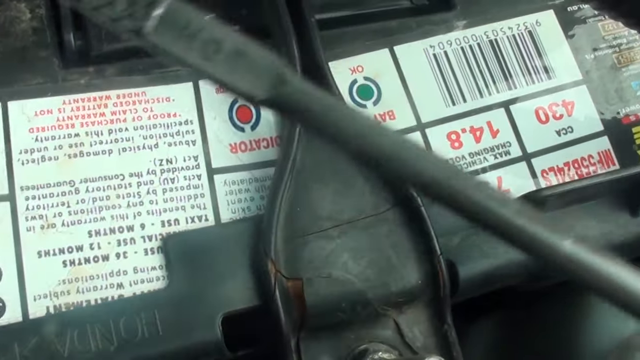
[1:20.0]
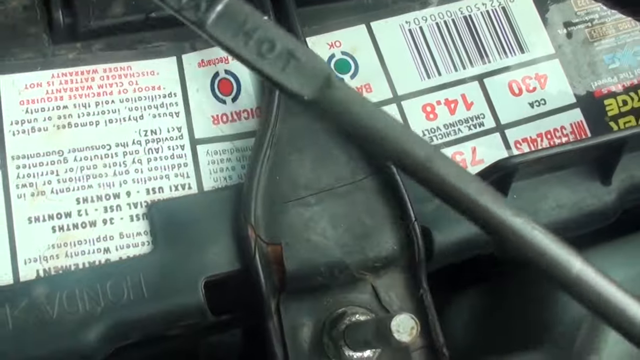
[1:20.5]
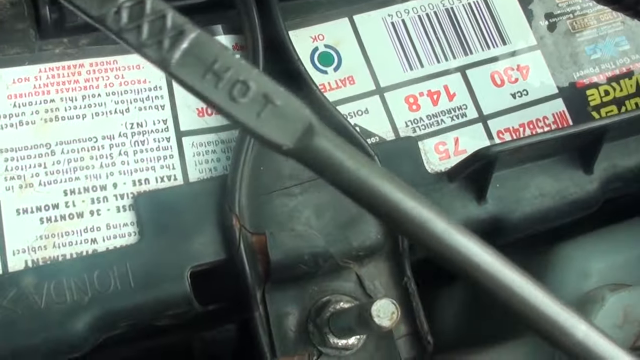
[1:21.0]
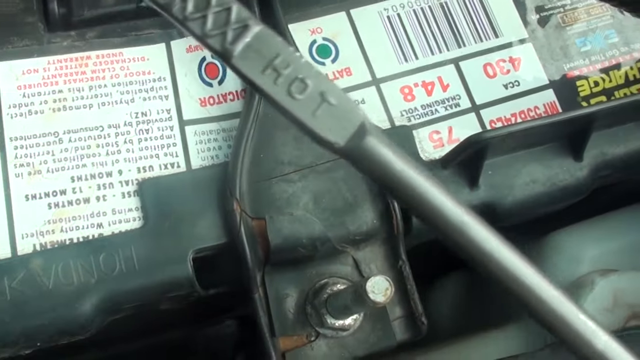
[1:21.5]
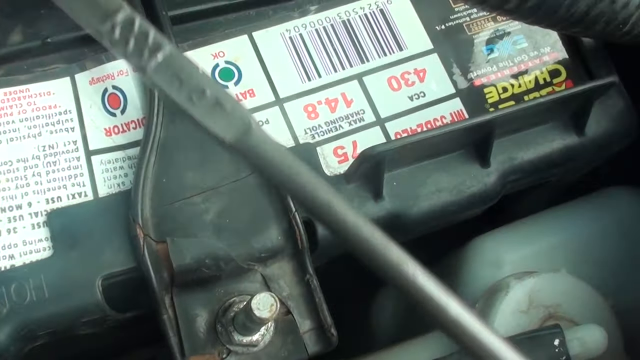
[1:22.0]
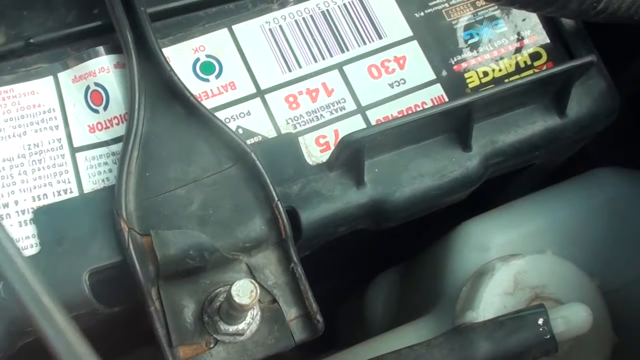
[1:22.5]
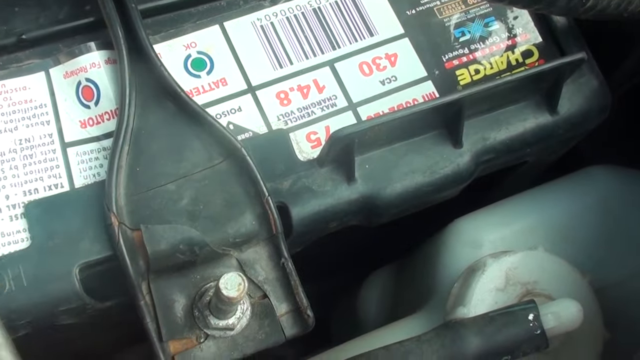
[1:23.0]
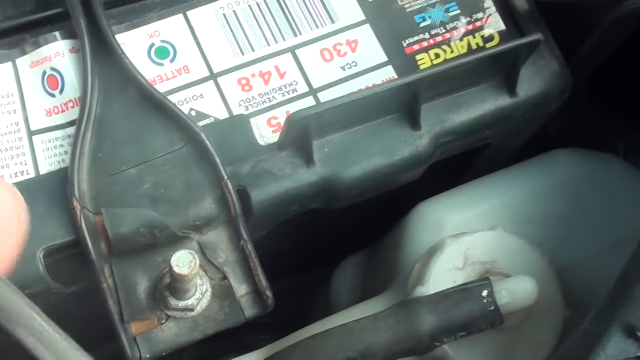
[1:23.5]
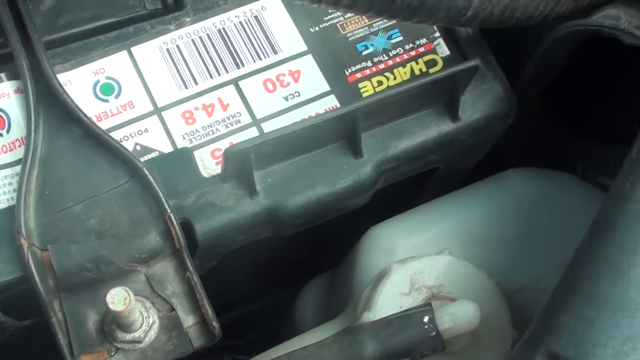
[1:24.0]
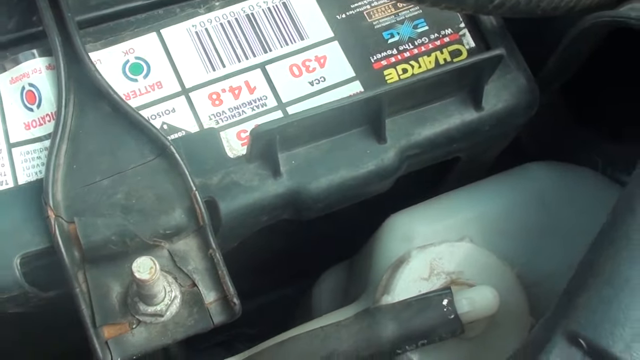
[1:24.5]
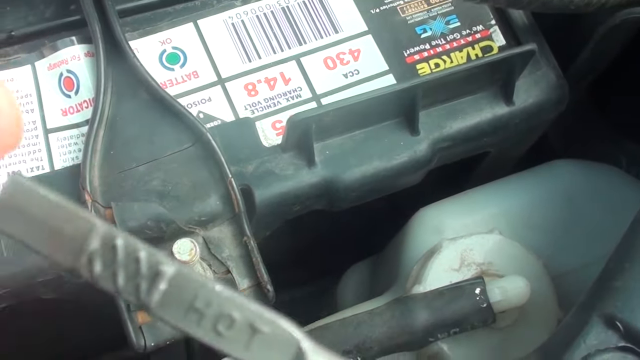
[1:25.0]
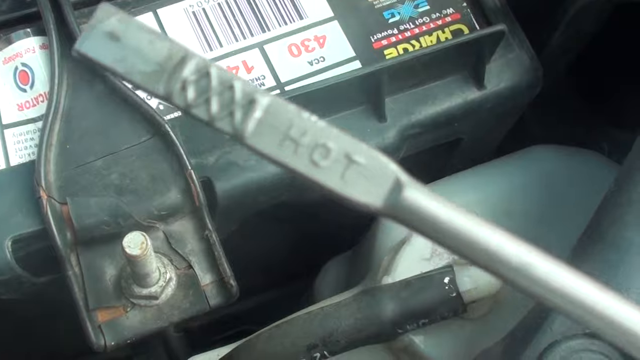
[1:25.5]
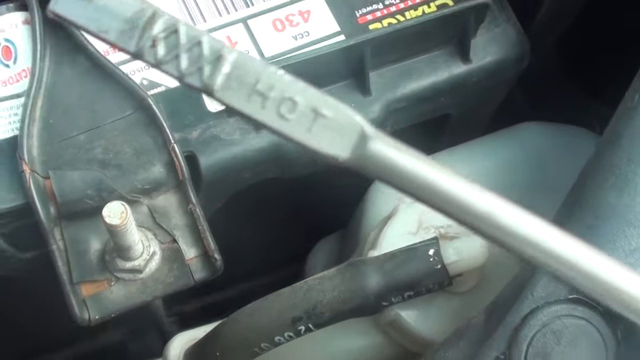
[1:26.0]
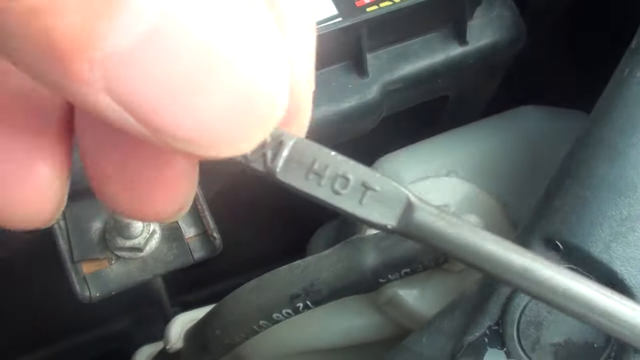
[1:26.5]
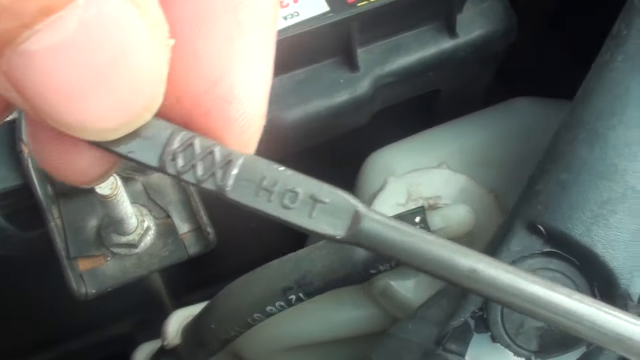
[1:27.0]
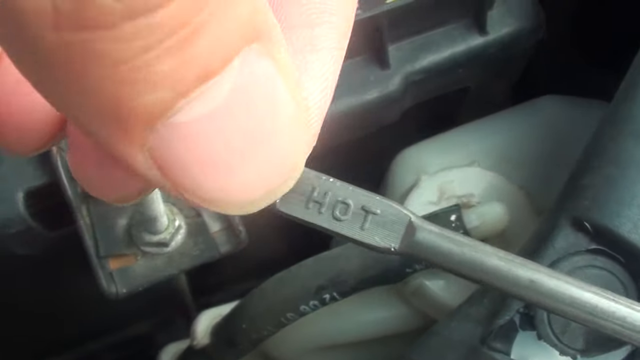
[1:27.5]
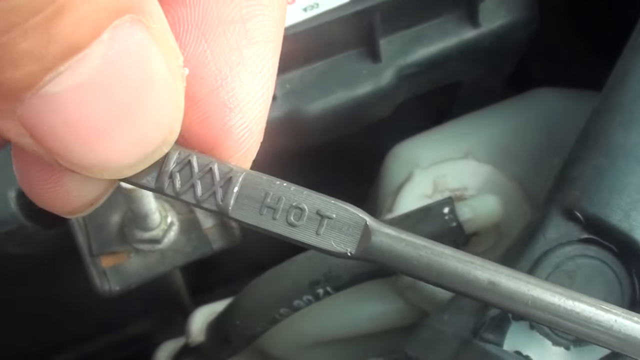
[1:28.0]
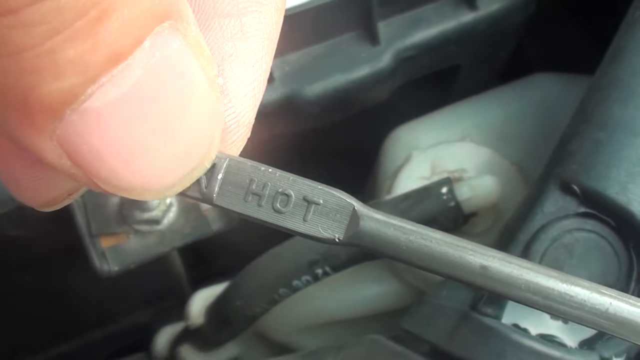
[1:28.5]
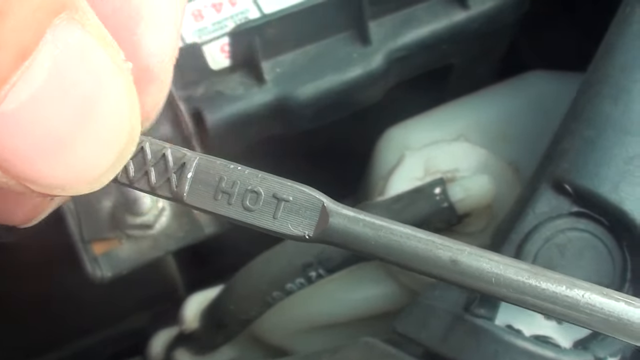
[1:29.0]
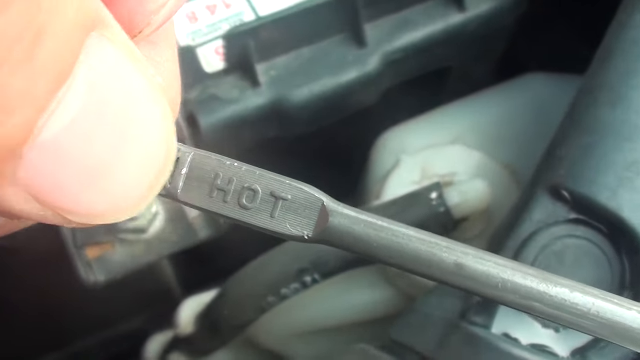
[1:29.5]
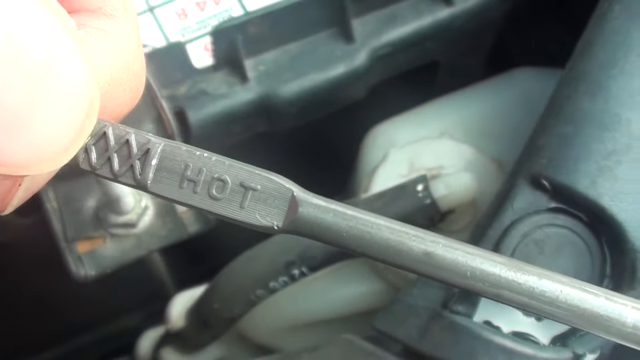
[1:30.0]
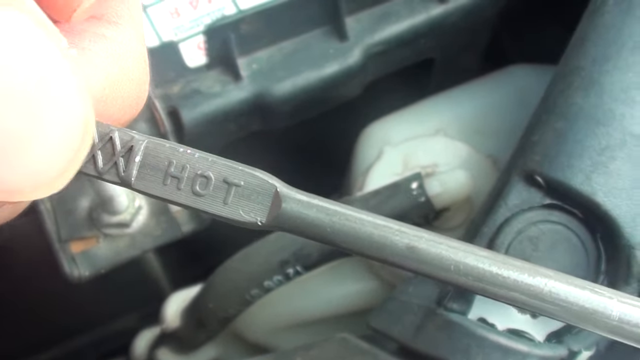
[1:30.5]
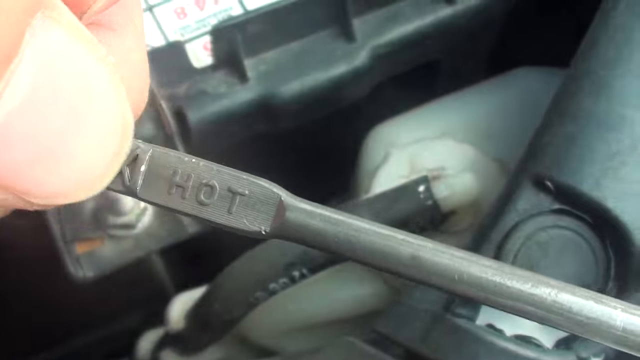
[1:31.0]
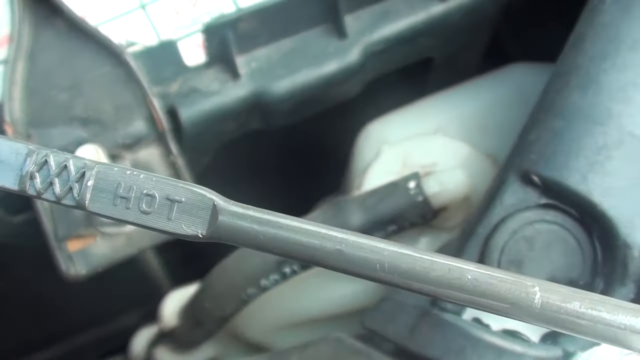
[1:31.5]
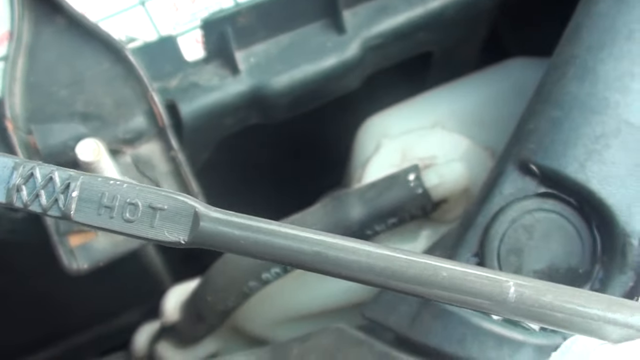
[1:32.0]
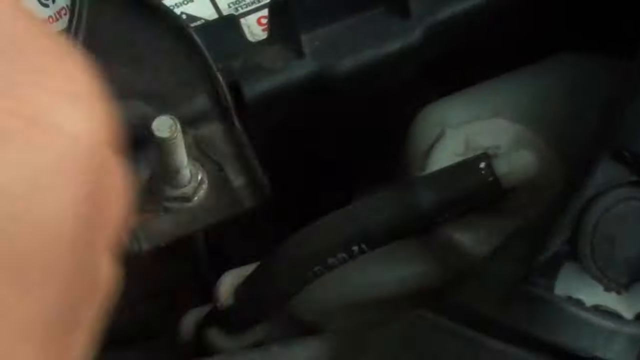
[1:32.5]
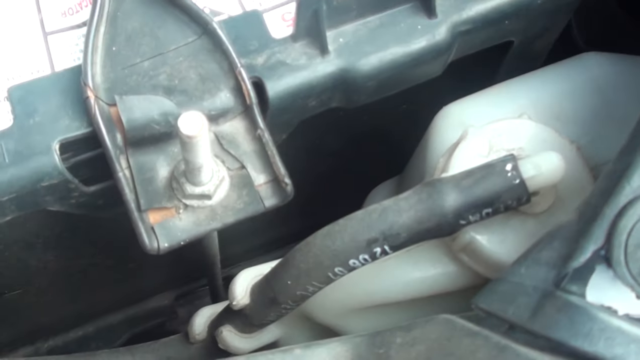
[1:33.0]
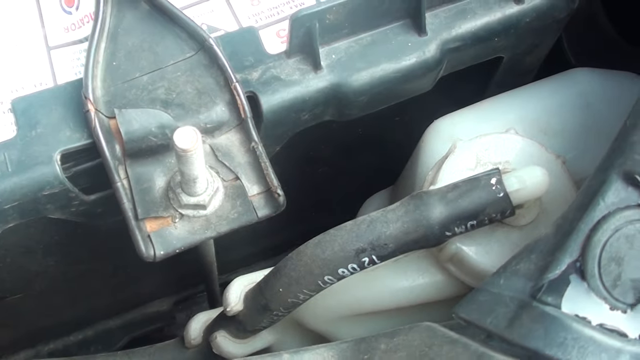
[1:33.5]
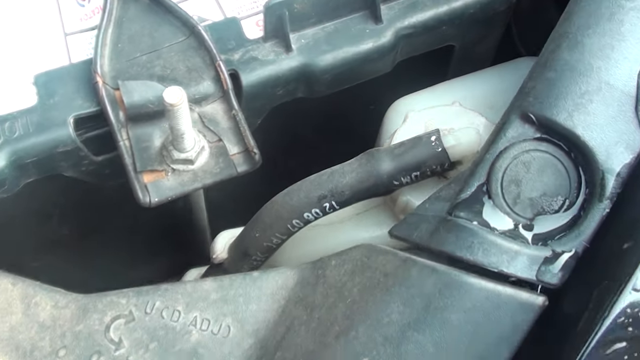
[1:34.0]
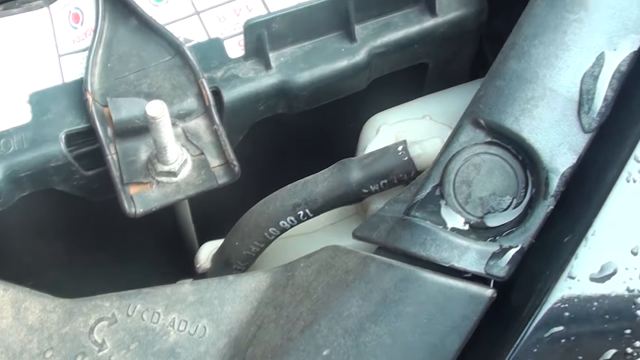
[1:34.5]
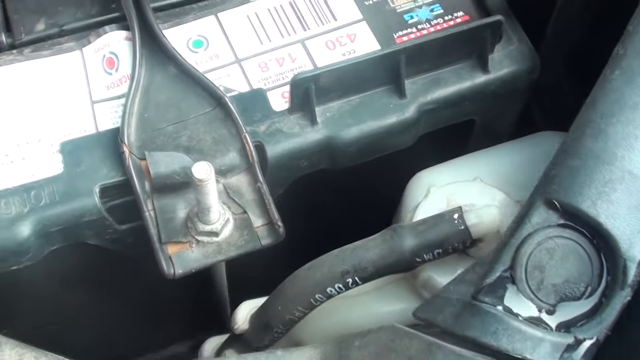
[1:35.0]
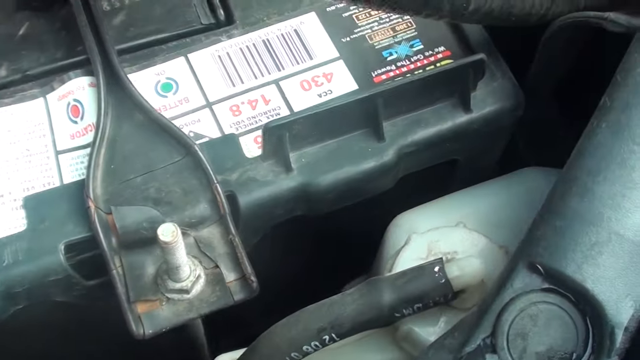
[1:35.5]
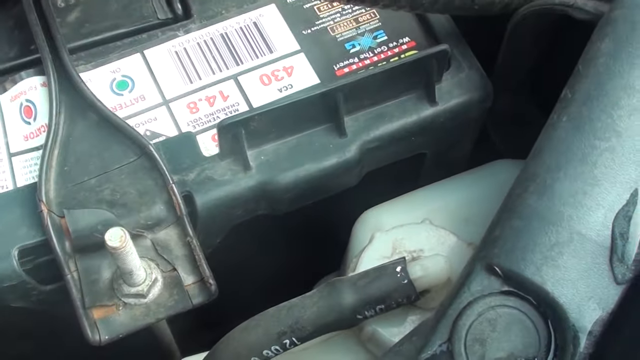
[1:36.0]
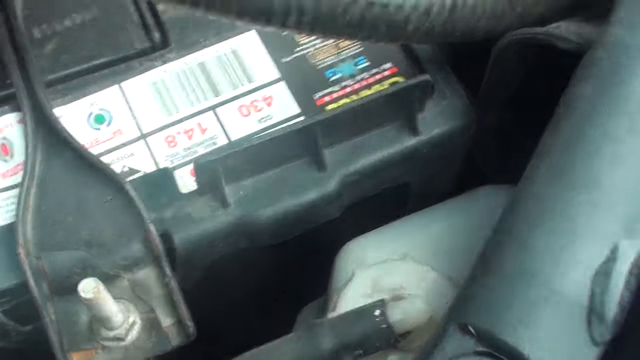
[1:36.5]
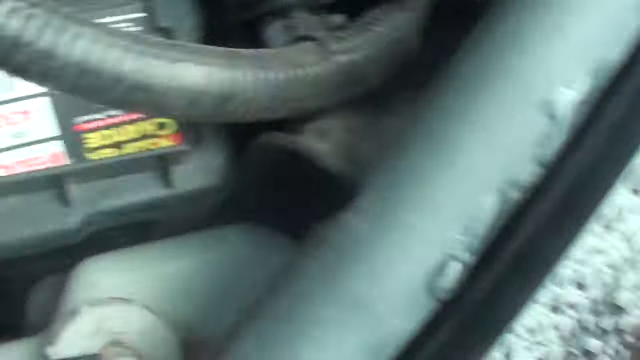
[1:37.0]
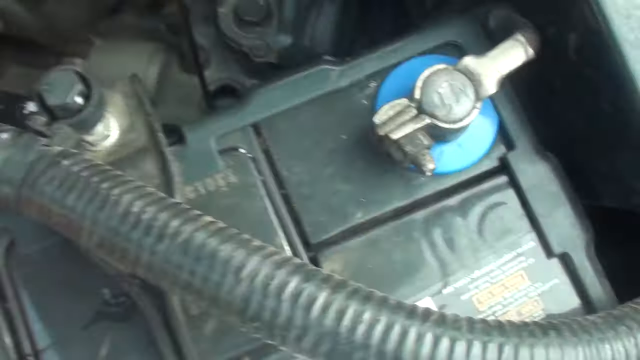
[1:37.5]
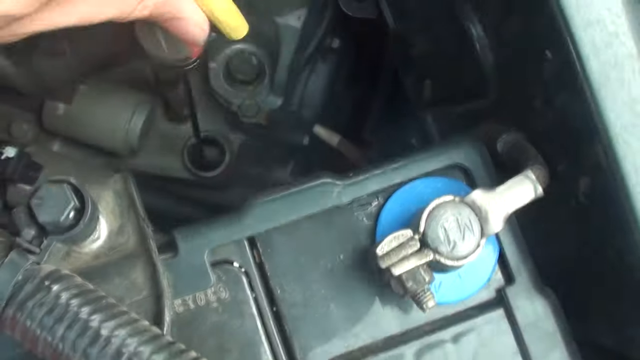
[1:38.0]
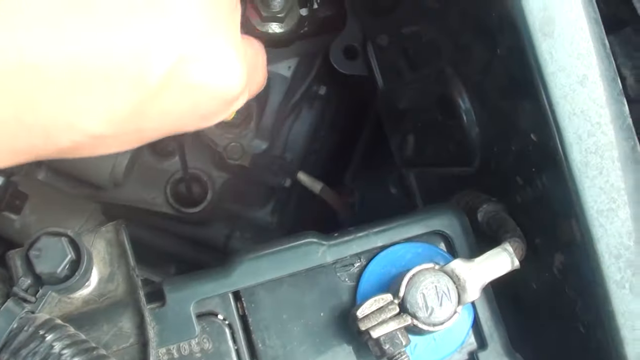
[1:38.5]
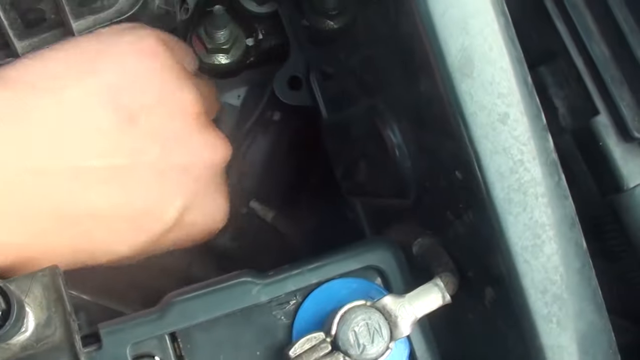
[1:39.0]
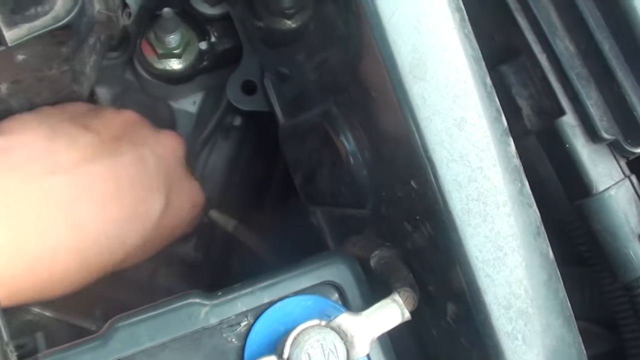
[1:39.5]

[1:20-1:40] With the hood of the Honda Civic 2007 open, the oil stick is shown to the camera, with some text and labels on top of a battery behind it. The stick moves out of frame, then the camera looks at it again, and two fingers grab the oil stick and rub it back and forth where the criss-cross X's are at the end of the stick. The stick also says "hot." The stick is moved out of view, and the camera focuses on the battery and the frame of the car. The camera then moves up, and a hand puts the yellow handle and the oil stick back into its hole, pushes down, and it clicks into place after the reading. Lots of tubes and pieces of metal are visible, along with the label on the battery with many different numbers.